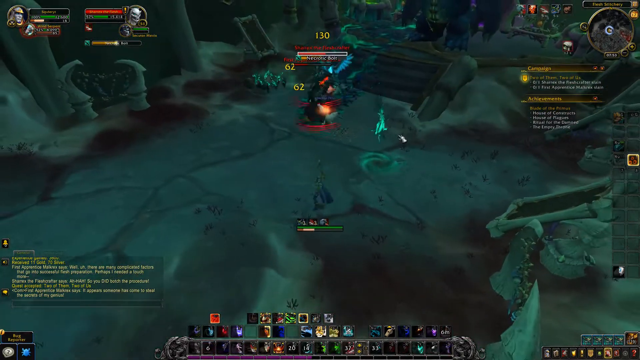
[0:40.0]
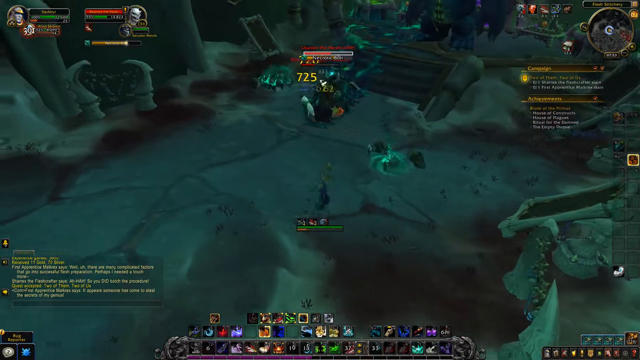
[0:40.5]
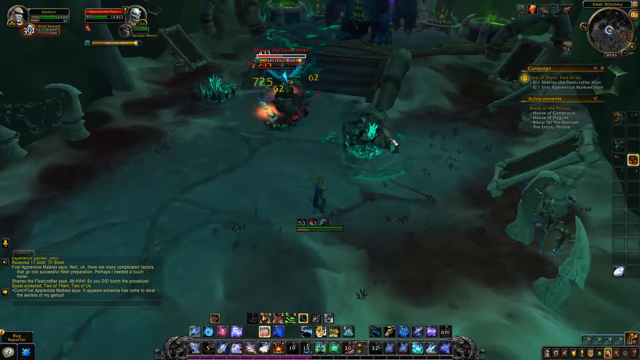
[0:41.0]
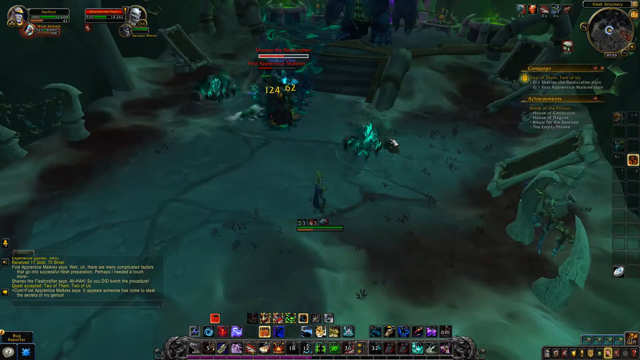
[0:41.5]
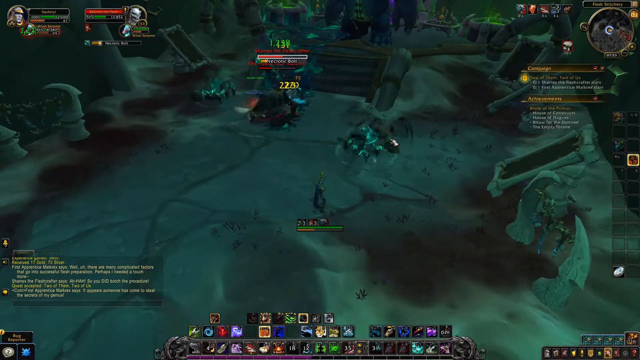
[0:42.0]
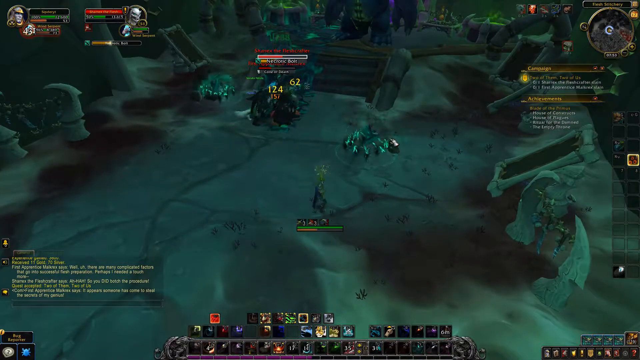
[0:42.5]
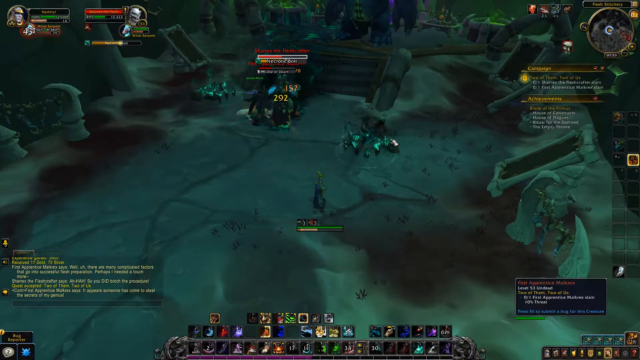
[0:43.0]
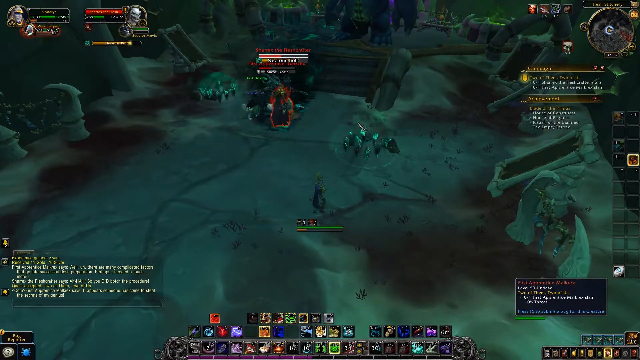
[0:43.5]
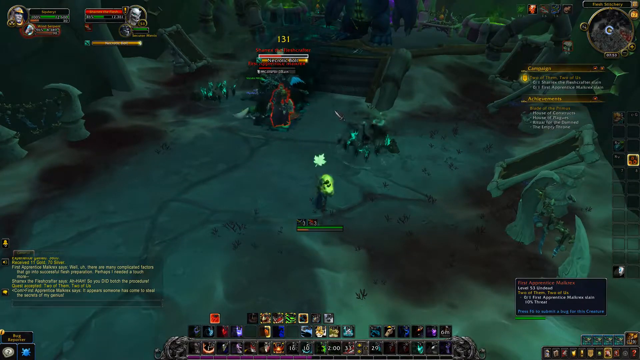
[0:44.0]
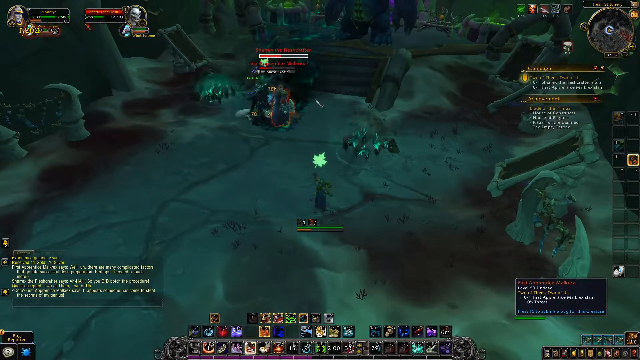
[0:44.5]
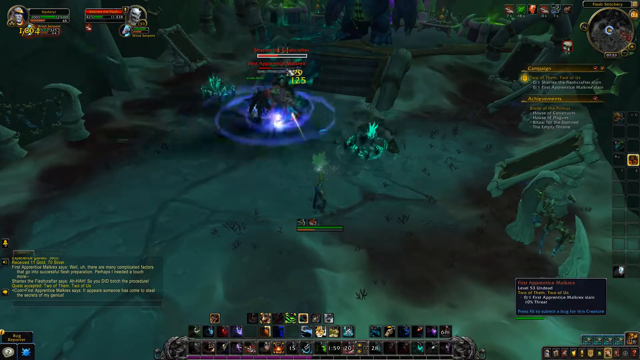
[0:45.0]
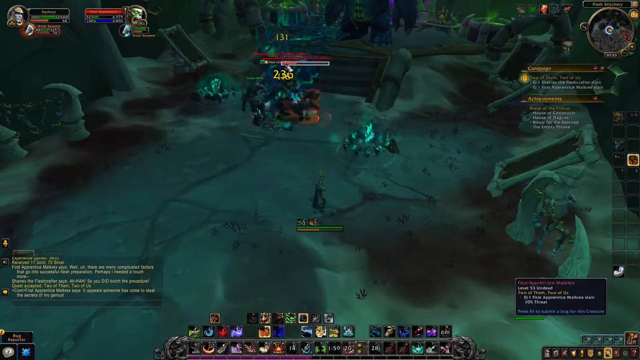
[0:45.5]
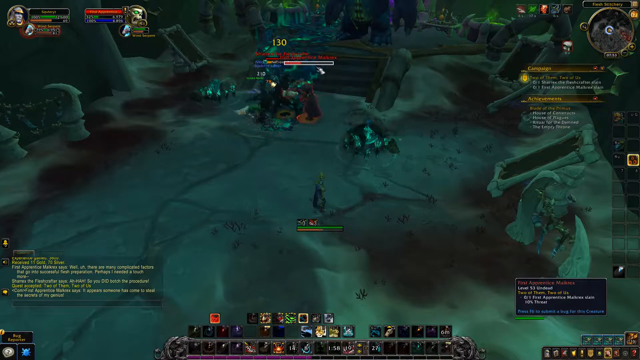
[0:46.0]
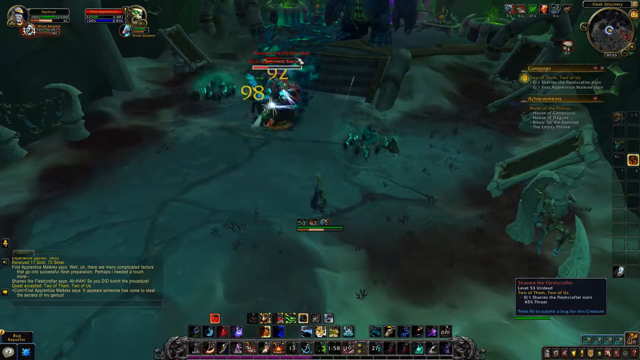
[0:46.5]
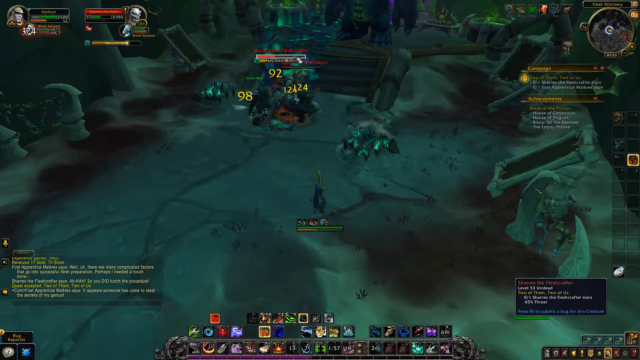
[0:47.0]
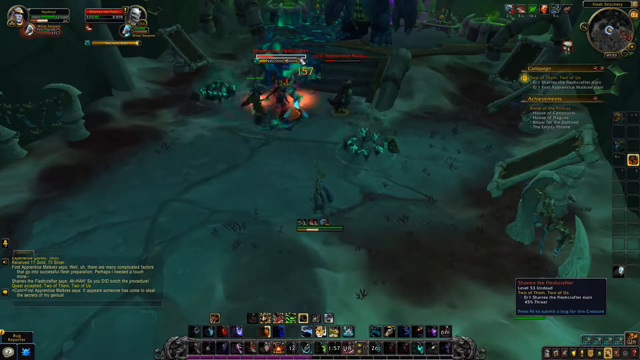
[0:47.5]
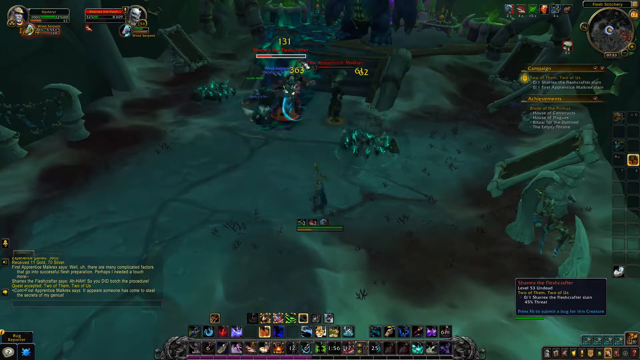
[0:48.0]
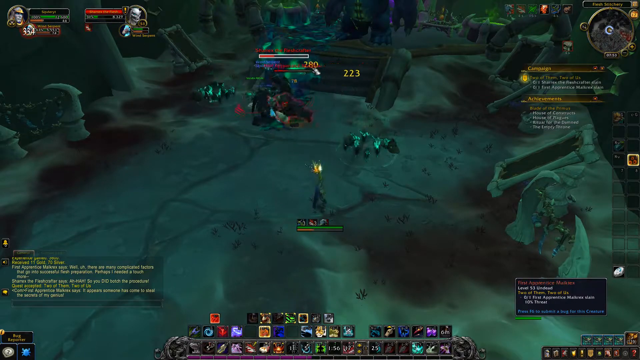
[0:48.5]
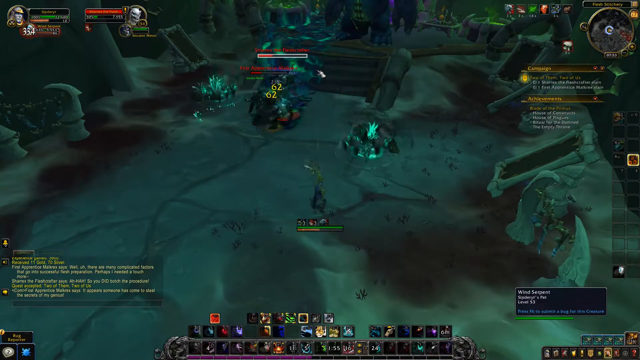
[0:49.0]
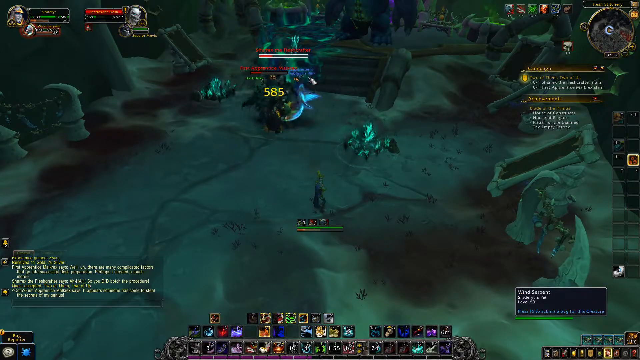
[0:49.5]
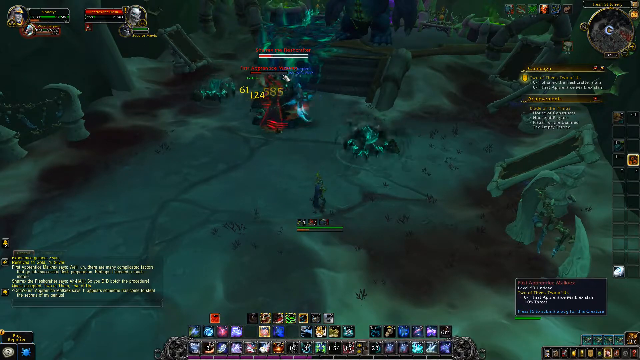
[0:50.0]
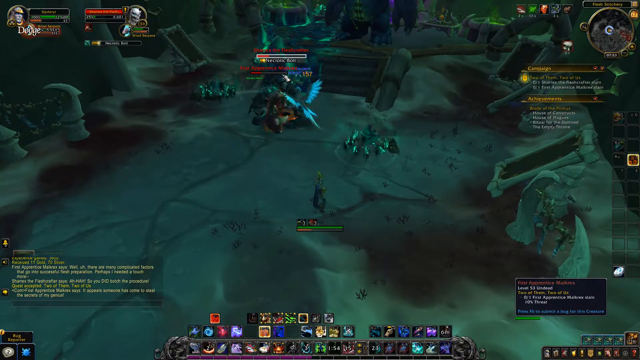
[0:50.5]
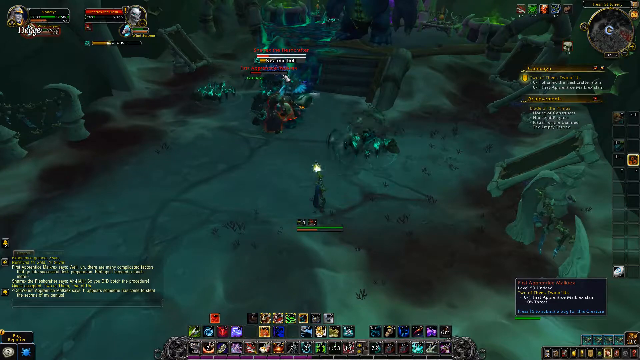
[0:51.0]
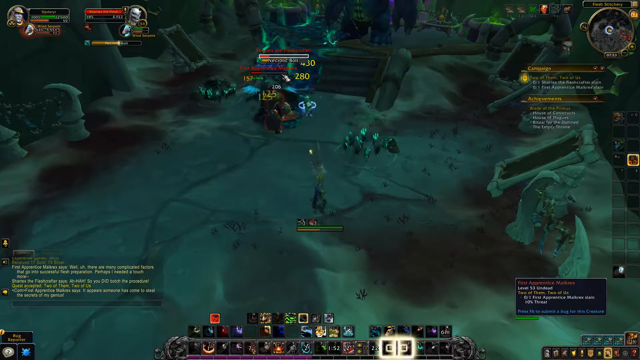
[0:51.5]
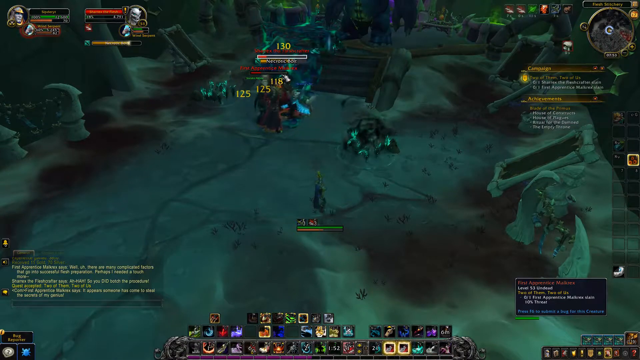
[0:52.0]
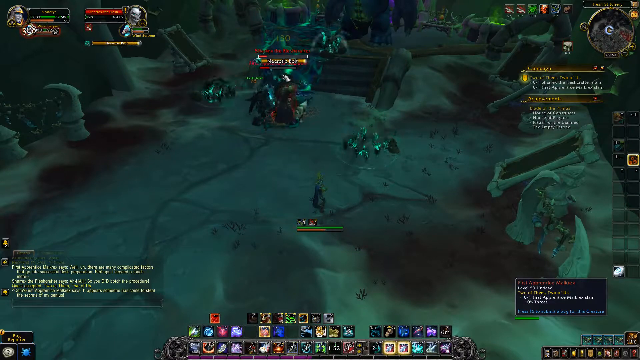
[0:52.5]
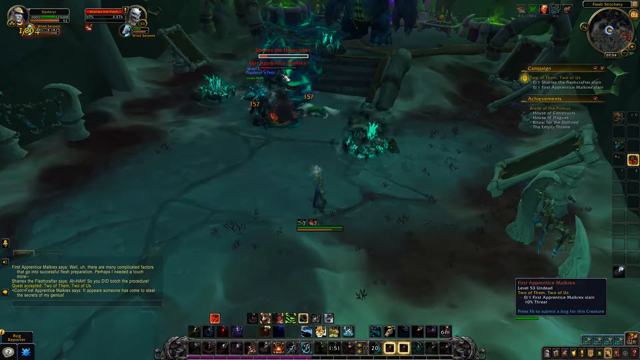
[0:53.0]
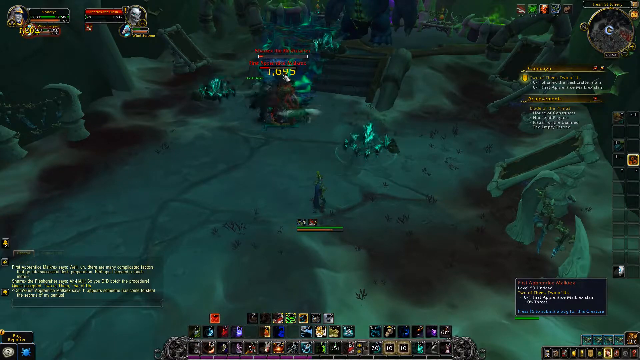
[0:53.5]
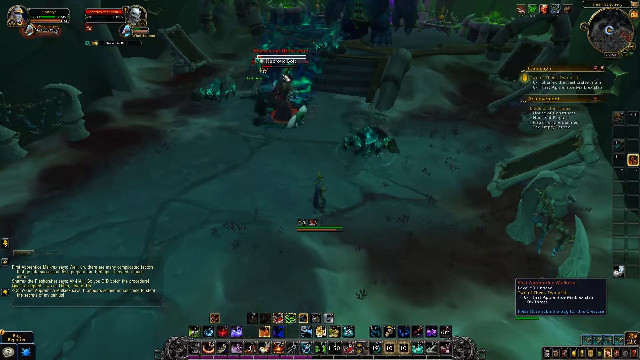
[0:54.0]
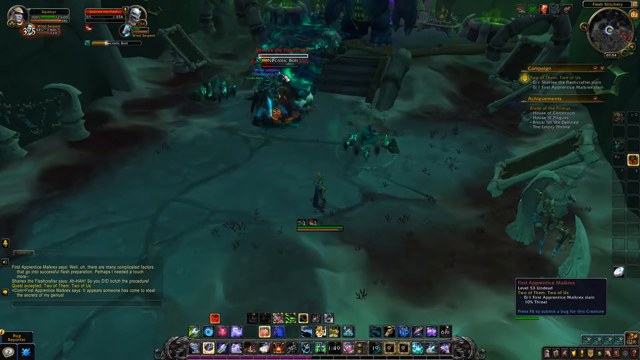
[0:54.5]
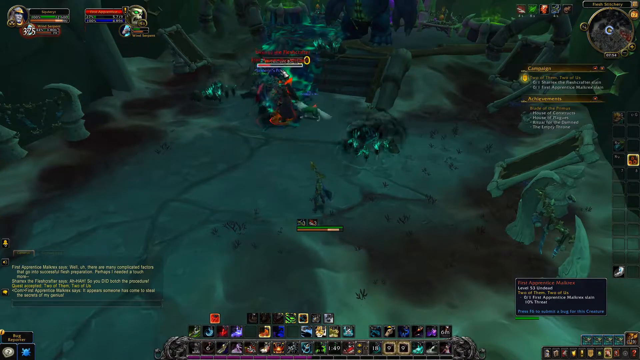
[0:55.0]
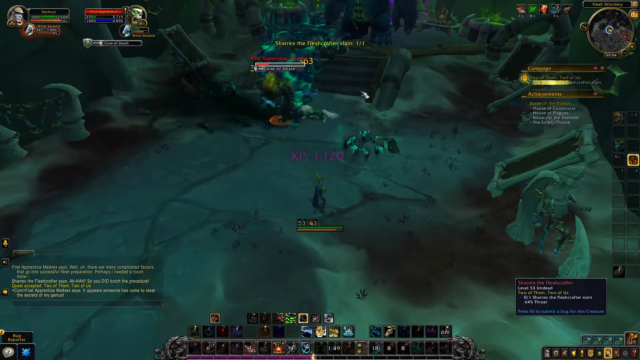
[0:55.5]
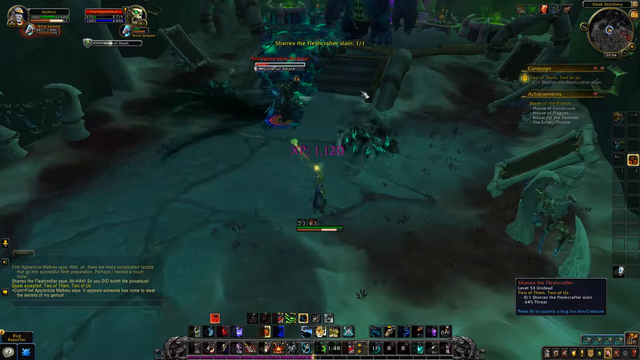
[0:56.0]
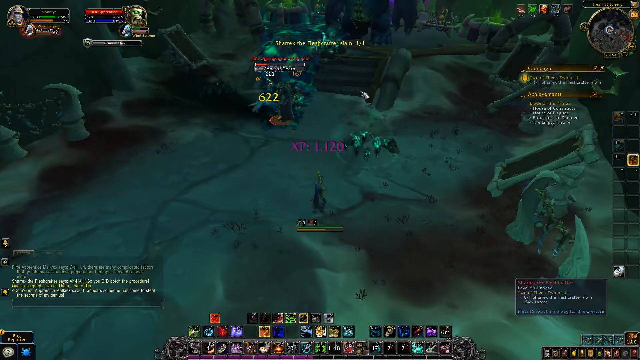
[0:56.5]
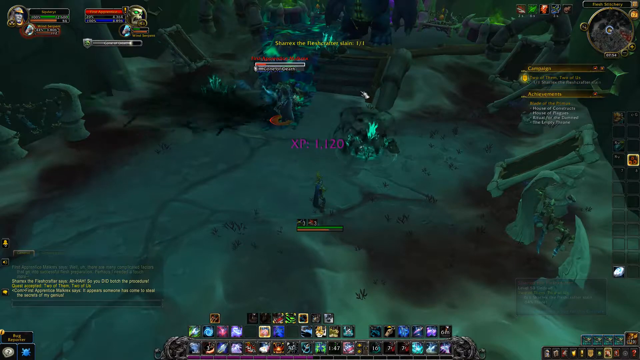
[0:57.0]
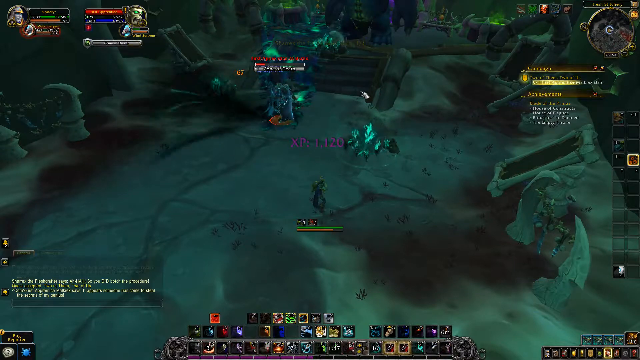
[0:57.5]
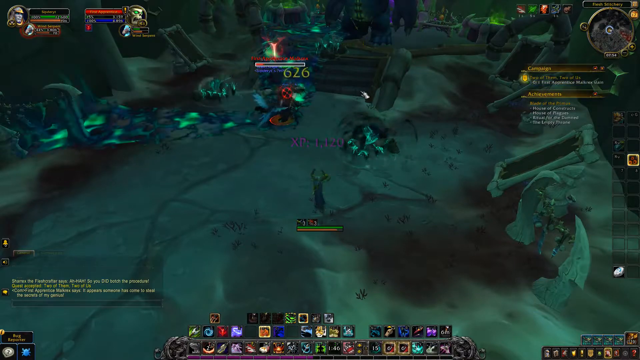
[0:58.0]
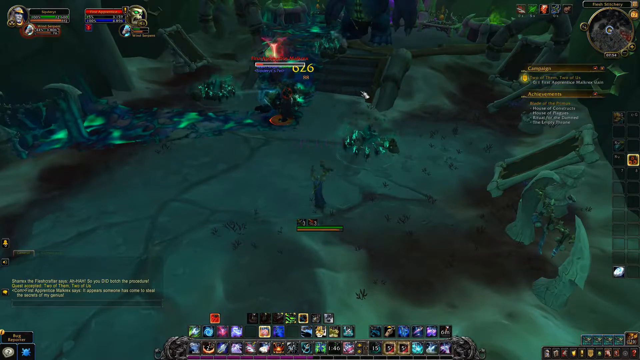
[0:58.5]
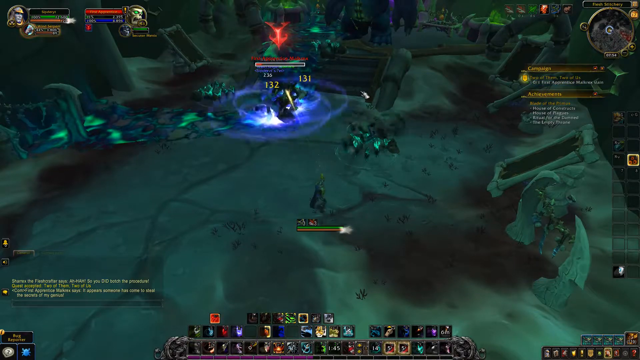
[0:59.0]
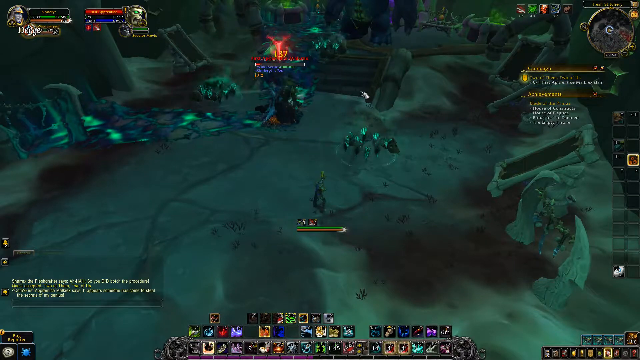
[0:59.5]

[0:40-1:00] The fighting continues. The main character seems to be using magic to let other creatures fight for them, firing a little gun now and then to get points while staying far away from the fighting. The animals, little spirit creatures, do the killing and most of the fighting while the main character stays fairly stationary, firing just a couple of gun shots or magical little shots. The whole game is dark; they are inside something like a little cavern, or possibly the world itself is just dark.